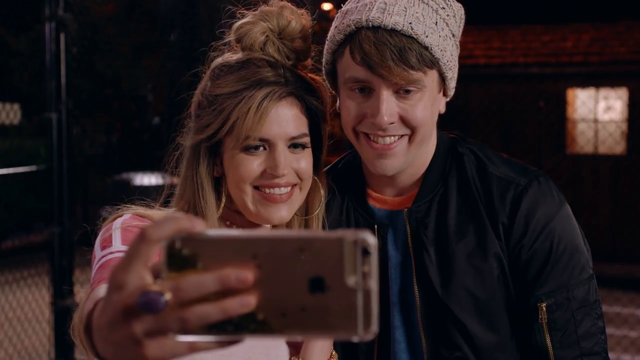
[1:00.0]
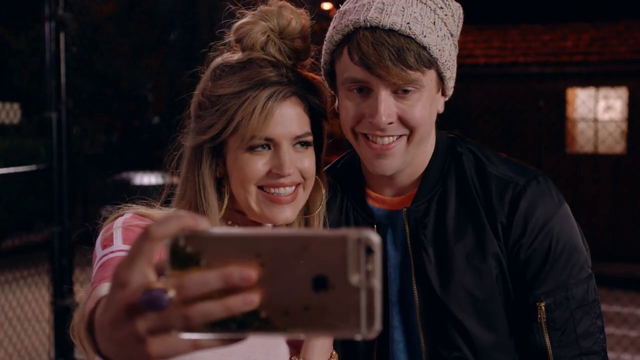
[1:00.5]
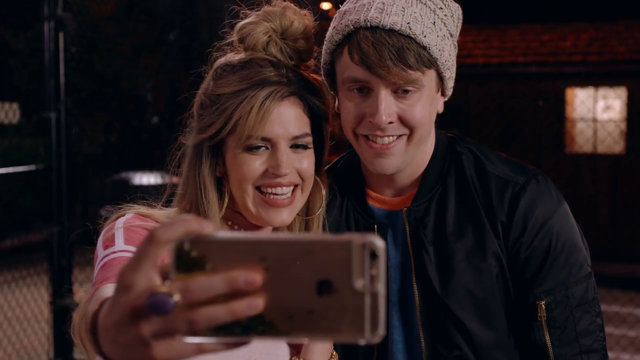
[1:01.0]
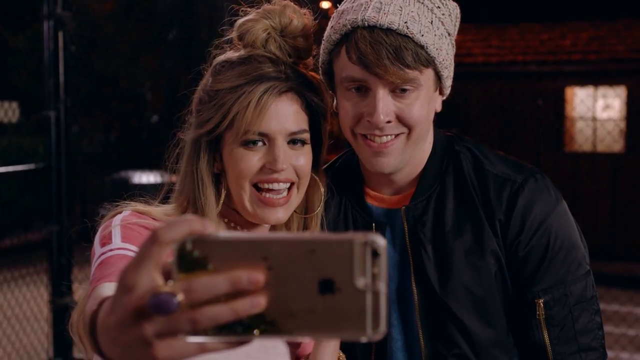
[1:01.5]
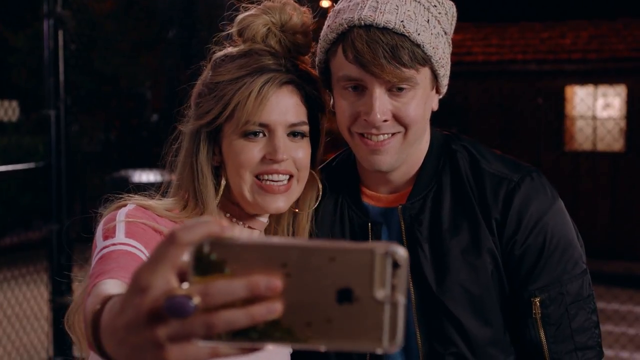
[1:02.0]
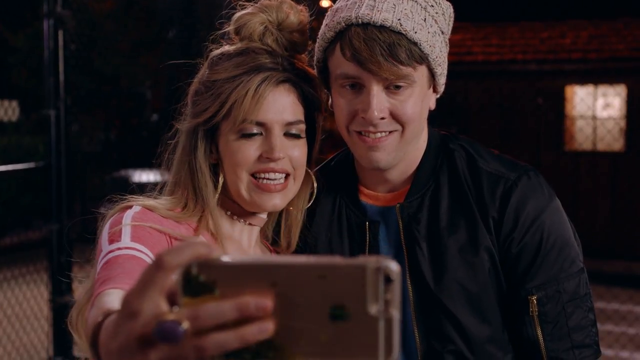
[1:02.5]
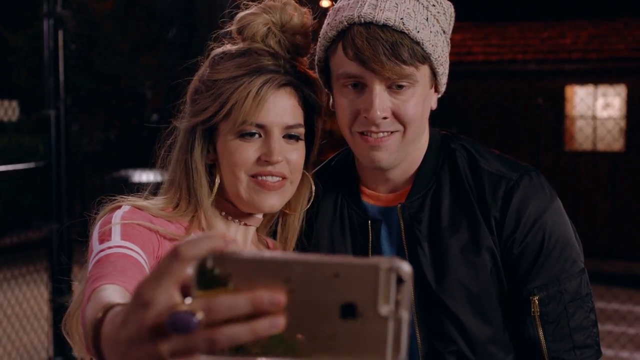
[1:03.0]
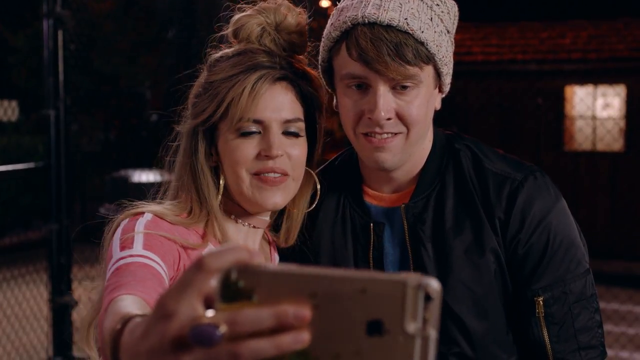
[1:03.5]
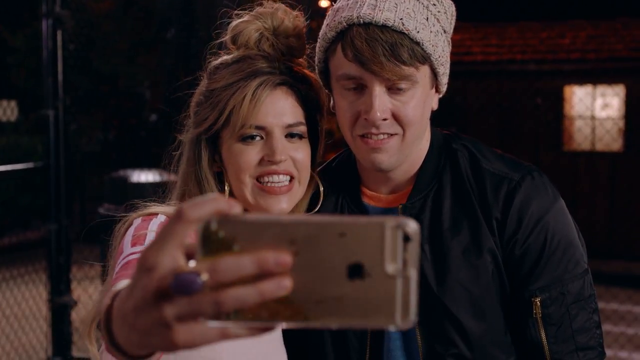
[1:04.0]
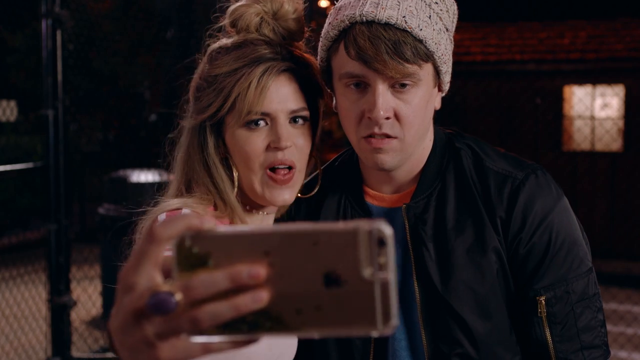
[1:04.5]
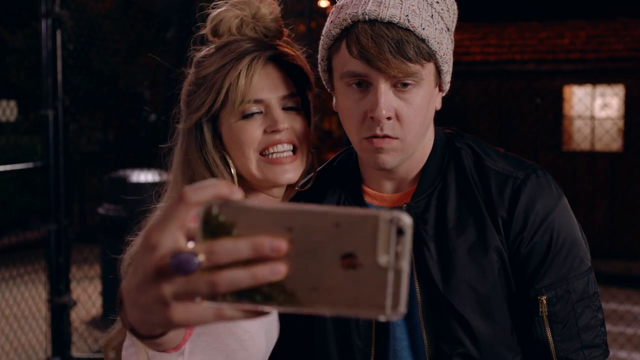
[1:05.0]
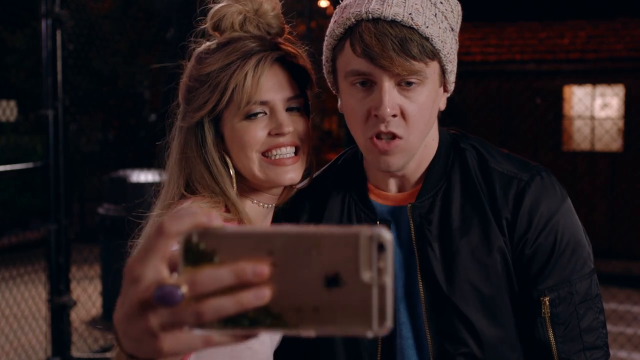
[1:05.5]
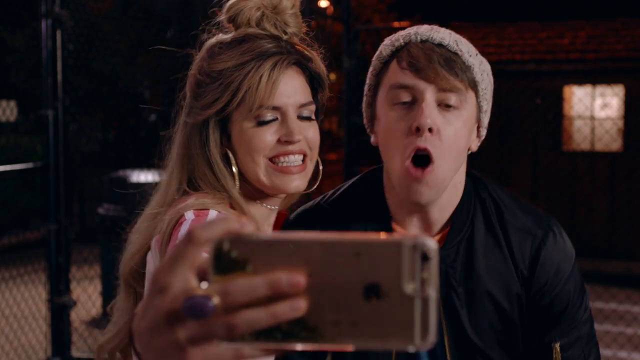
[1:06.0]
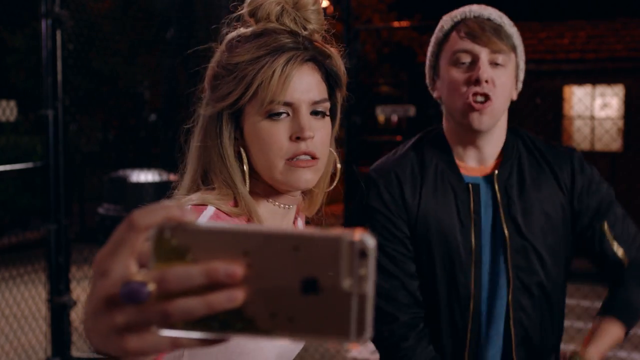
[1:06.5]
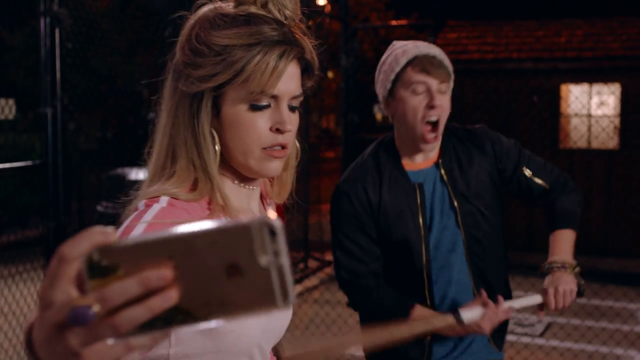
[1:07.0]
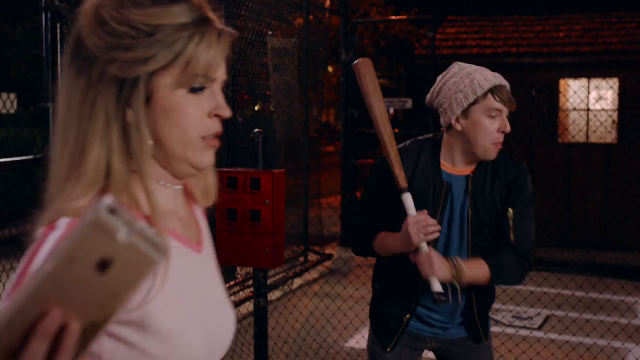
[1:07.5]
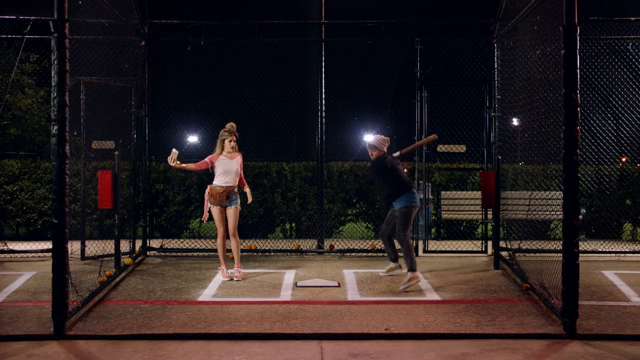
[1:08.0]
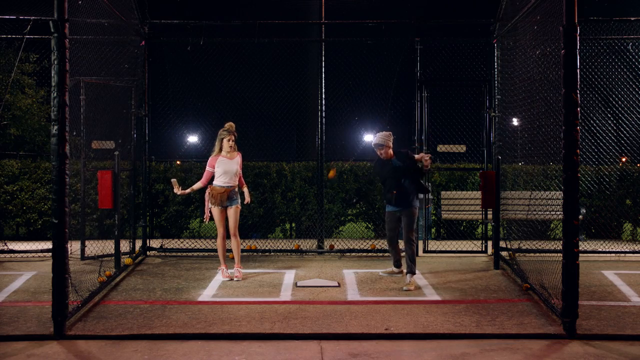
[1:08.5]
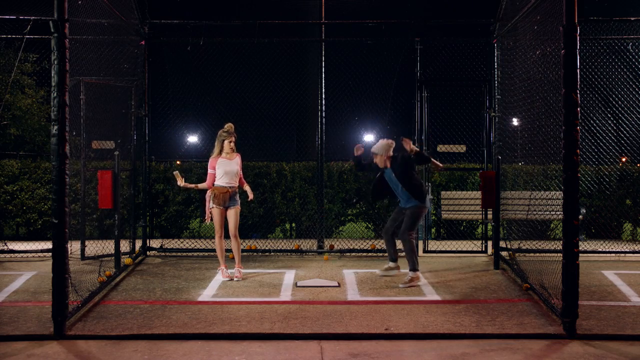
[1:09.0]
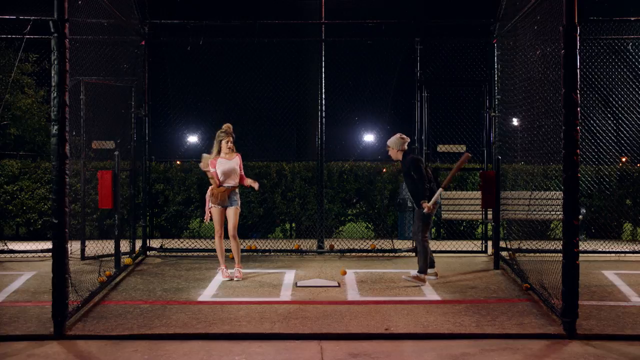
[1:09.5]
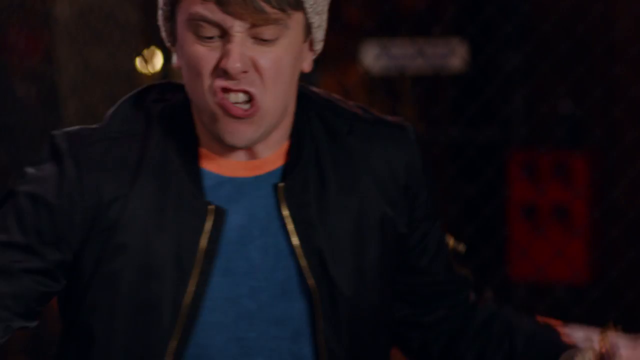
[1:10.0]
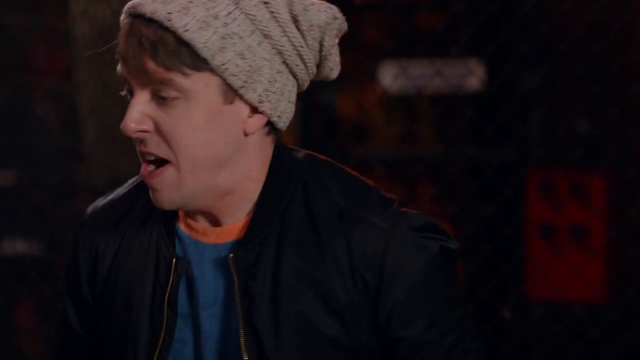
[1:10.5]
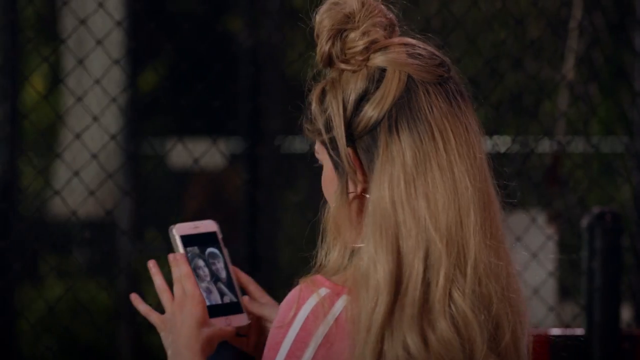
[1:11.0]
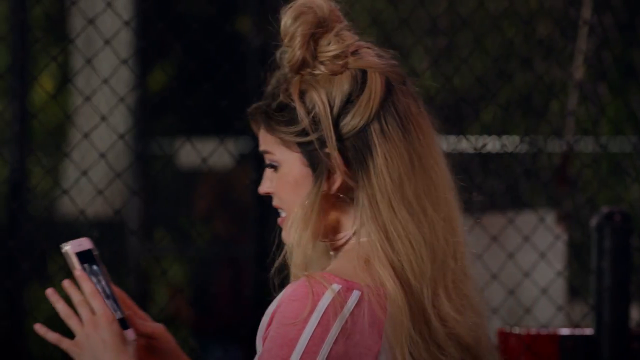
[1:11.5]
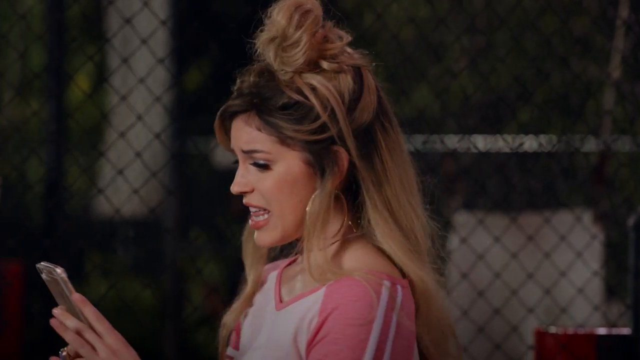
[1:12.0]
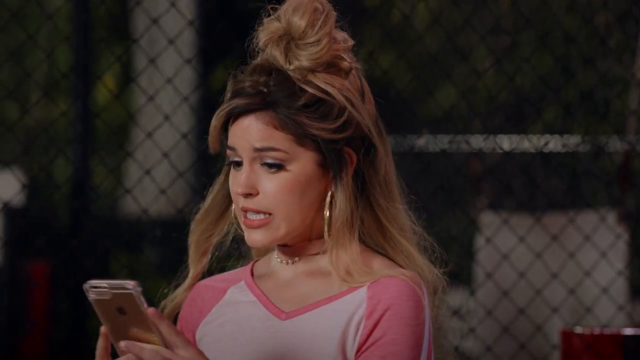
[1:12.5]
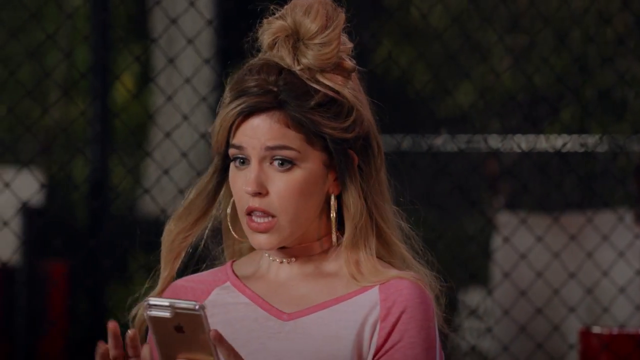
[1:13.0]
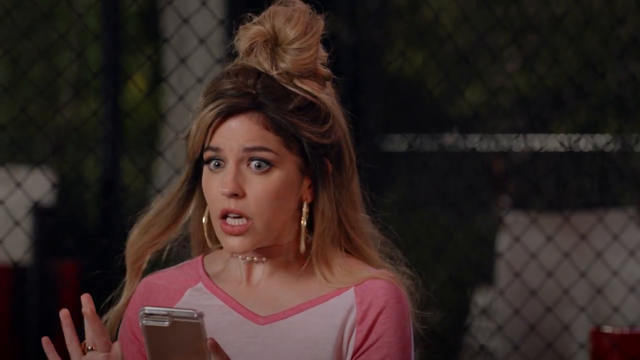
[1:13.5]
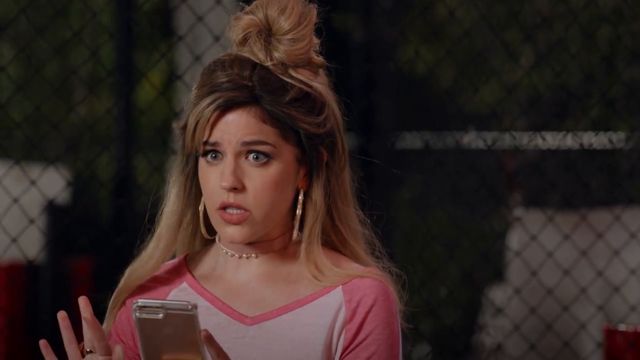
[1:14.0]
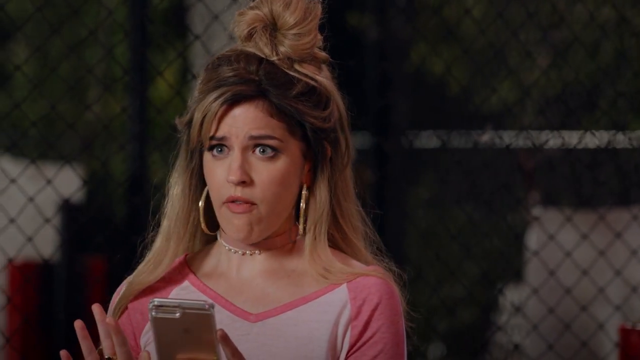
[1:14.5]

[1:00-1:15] A man and a woman are close to each other taking a selfie together. The woman holds the phone, and both stare at it and smile. He wears a bomber jacket, a blue t-shirt and a gray winter hat; she has long dirty-blonde hair, blue eyes and a pink sporty baseball-style top. They talk, look at the camera and pose. Then he stops, very upset, and backs off, and the camera pans out to show that they are in a batting cage of black chain-link mesh. A row of hedges is behind them, so it is outdoors, and it is nighttime, with some flood lamps illuminating the scene. He is crouched in the batter's box, and a pitch goes way over his head; he completely misses it and is upset afterward. The shot cuts to a close-up of him, very upset, and then to the woman, who looks at her phone and is sort of mouthing something that is hard to make out. She seems to be a little, kind of snooty, and has big hoop earrings and a necklace.